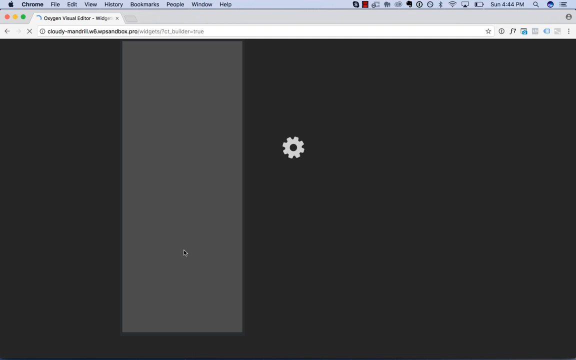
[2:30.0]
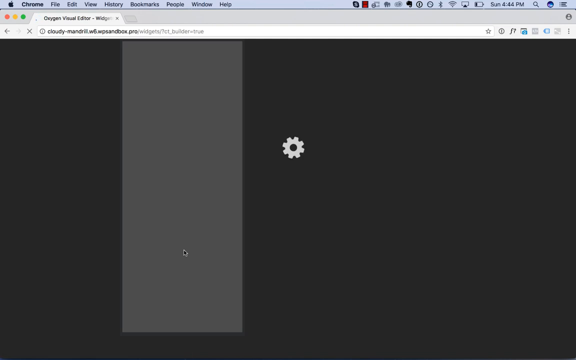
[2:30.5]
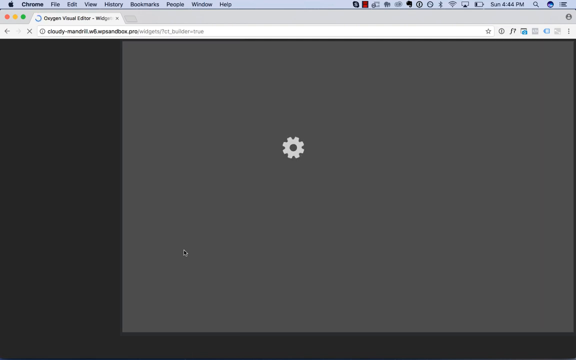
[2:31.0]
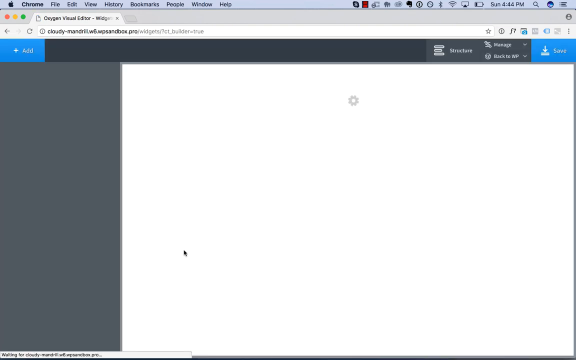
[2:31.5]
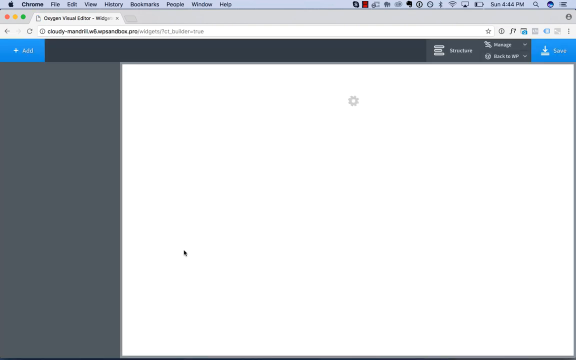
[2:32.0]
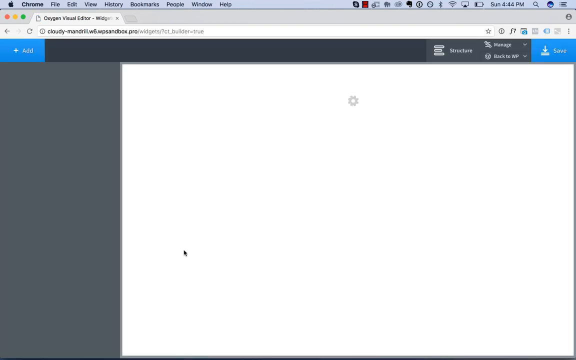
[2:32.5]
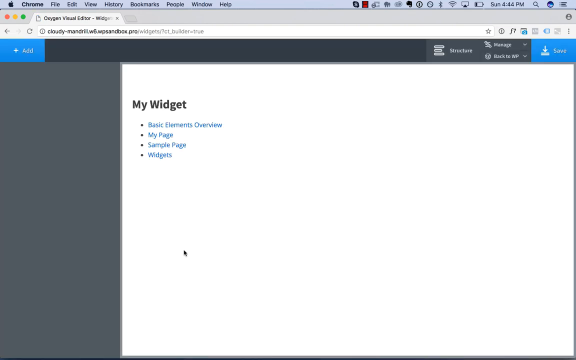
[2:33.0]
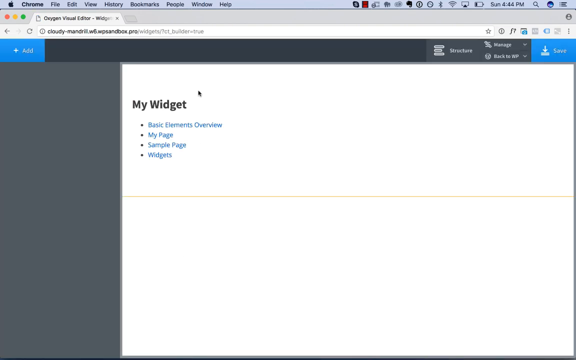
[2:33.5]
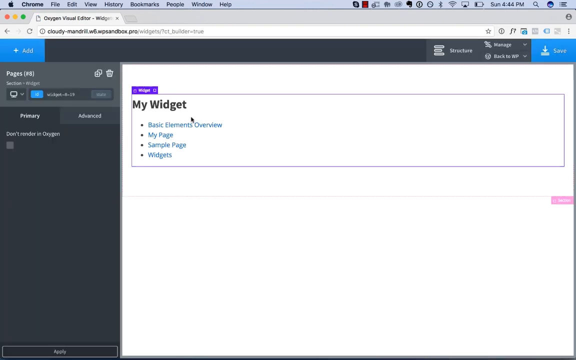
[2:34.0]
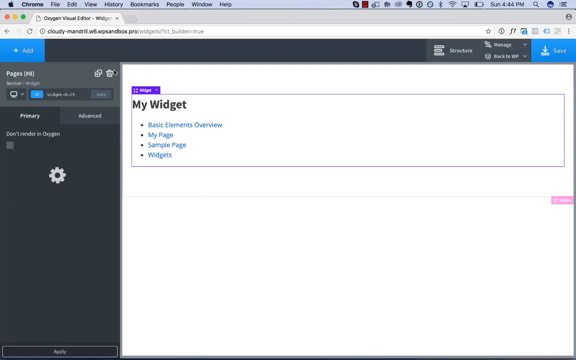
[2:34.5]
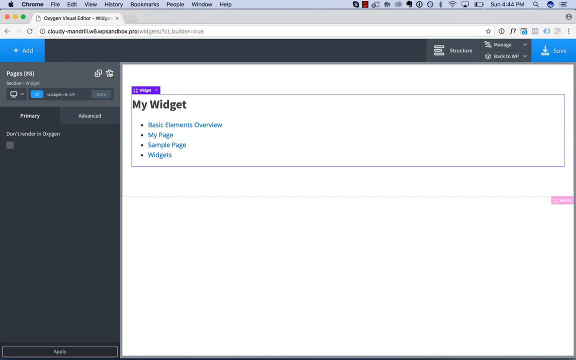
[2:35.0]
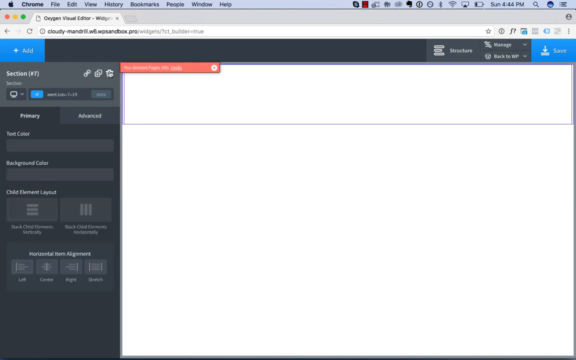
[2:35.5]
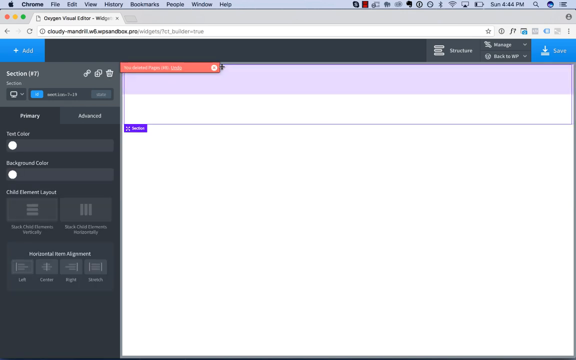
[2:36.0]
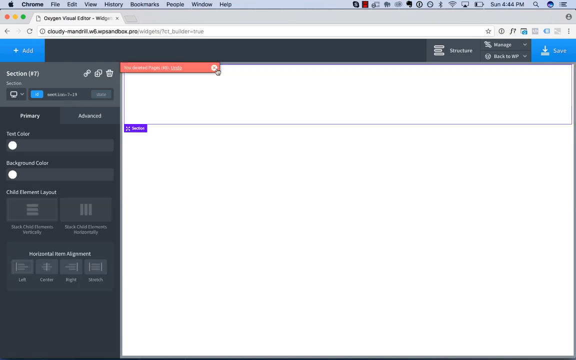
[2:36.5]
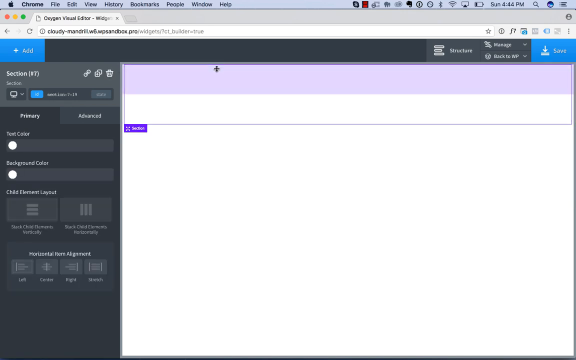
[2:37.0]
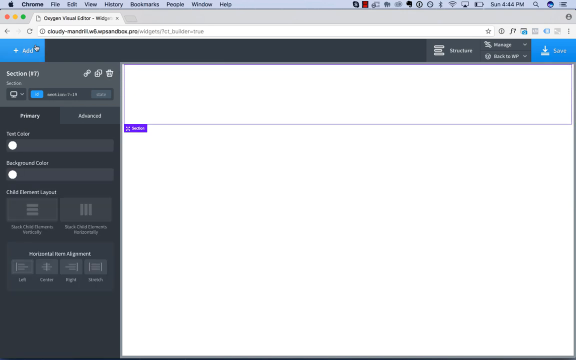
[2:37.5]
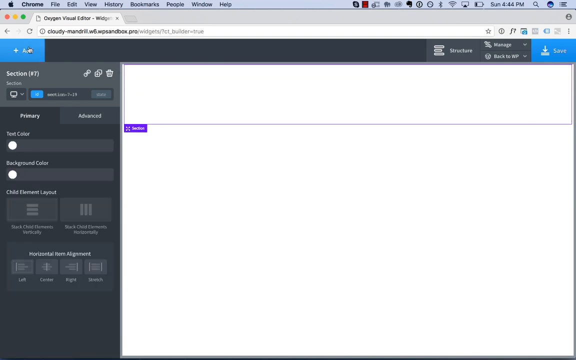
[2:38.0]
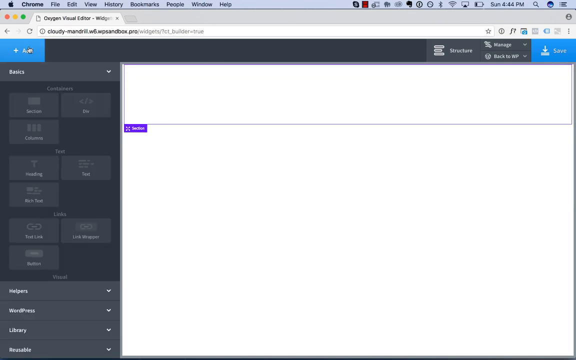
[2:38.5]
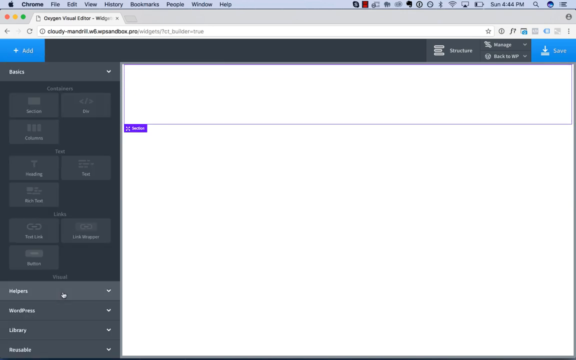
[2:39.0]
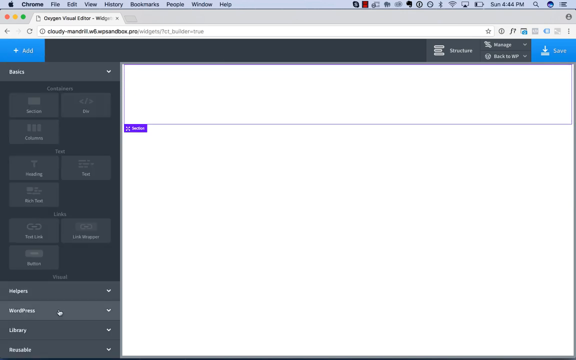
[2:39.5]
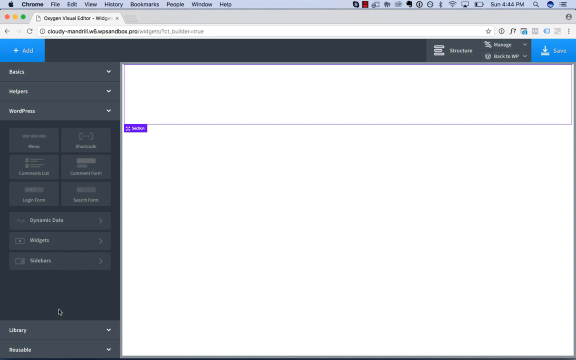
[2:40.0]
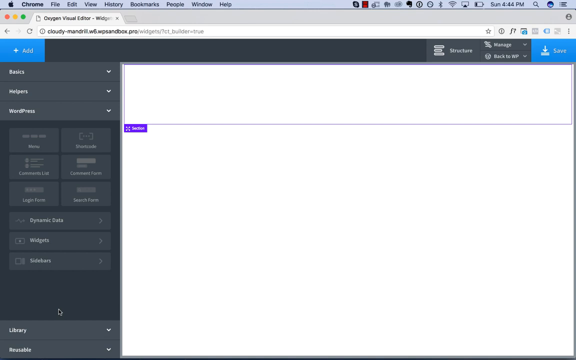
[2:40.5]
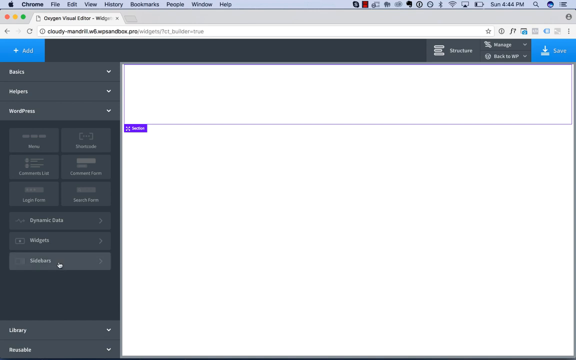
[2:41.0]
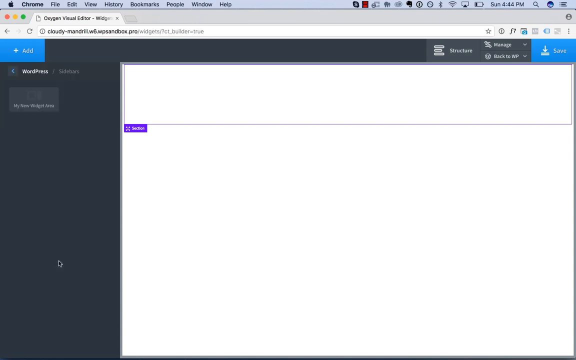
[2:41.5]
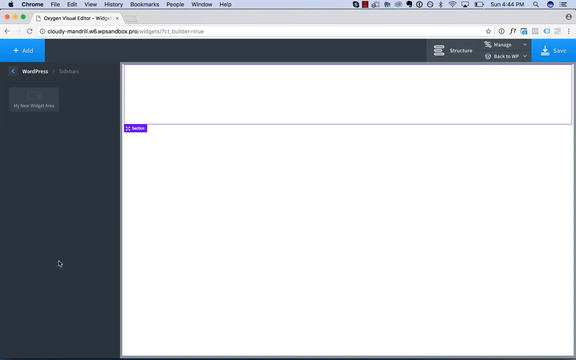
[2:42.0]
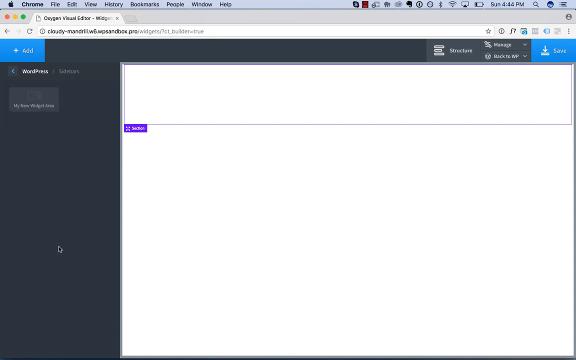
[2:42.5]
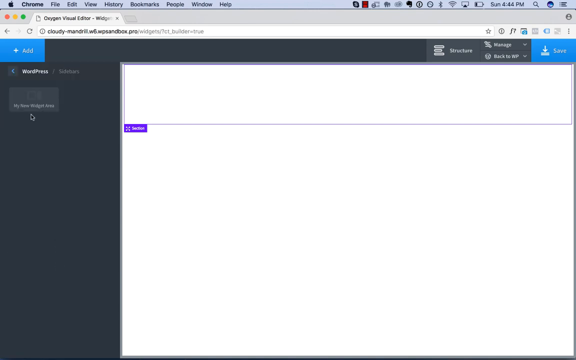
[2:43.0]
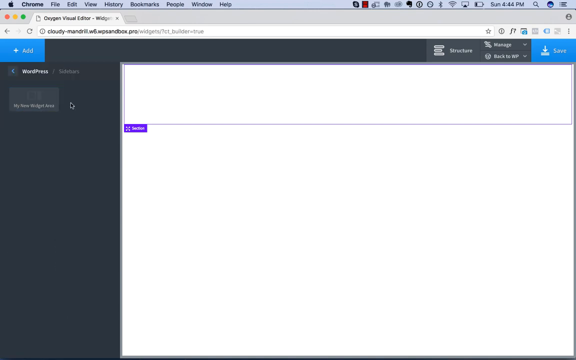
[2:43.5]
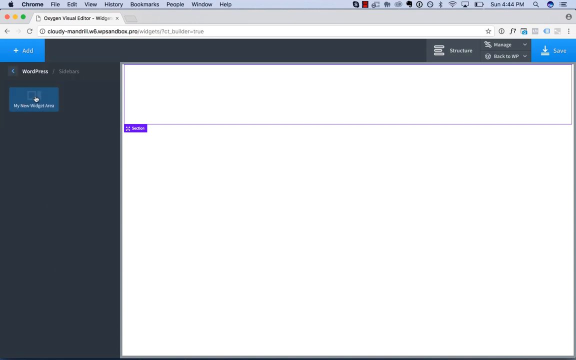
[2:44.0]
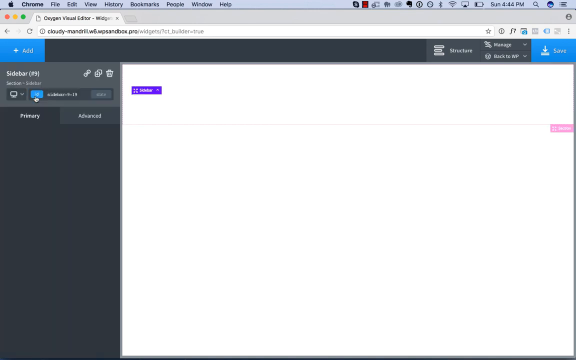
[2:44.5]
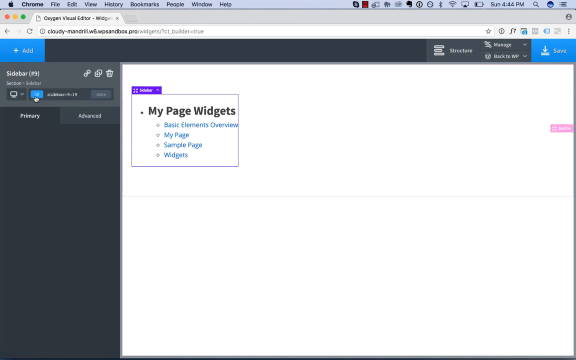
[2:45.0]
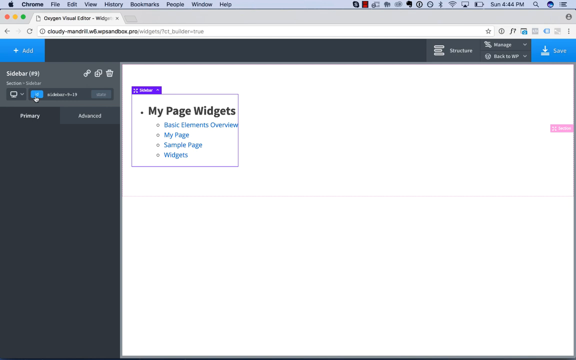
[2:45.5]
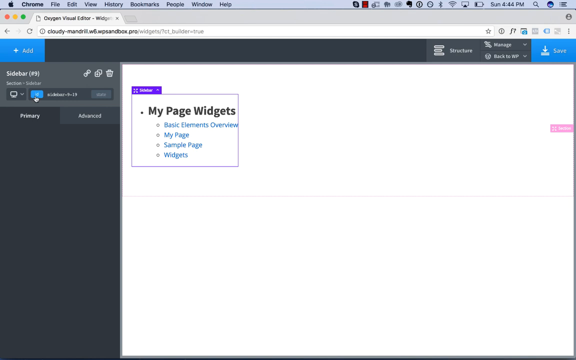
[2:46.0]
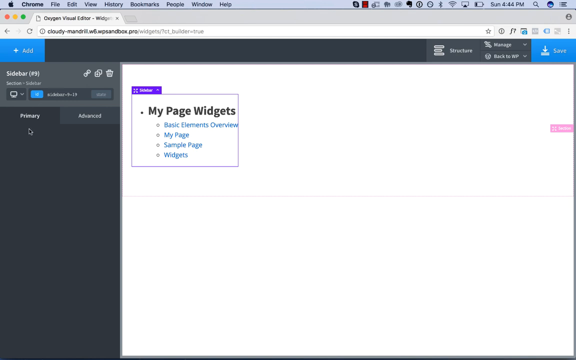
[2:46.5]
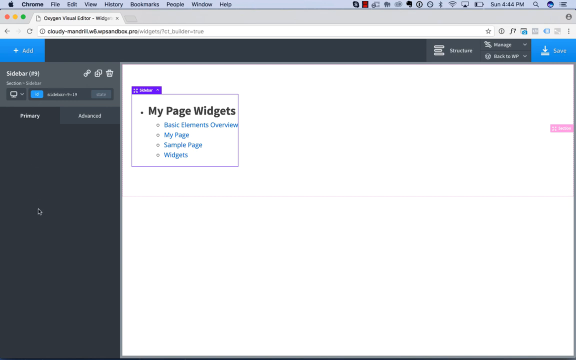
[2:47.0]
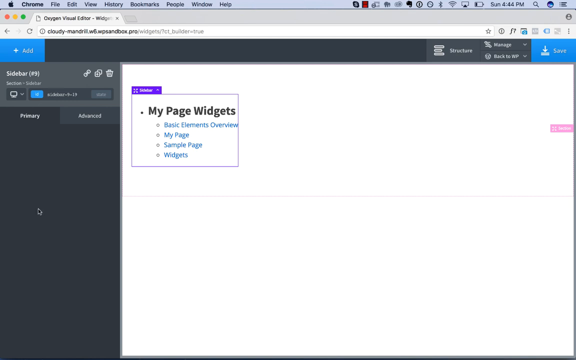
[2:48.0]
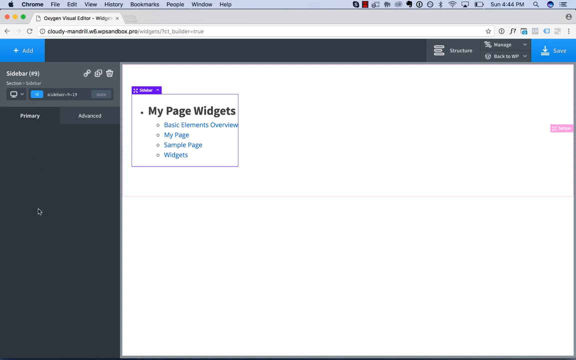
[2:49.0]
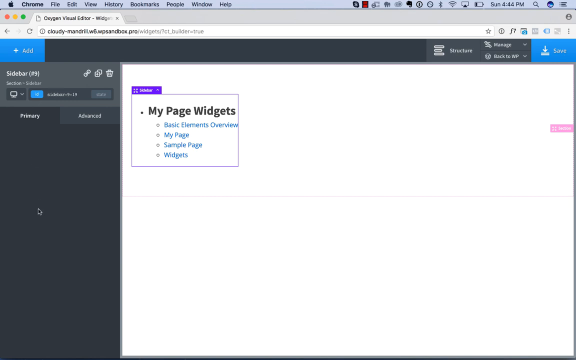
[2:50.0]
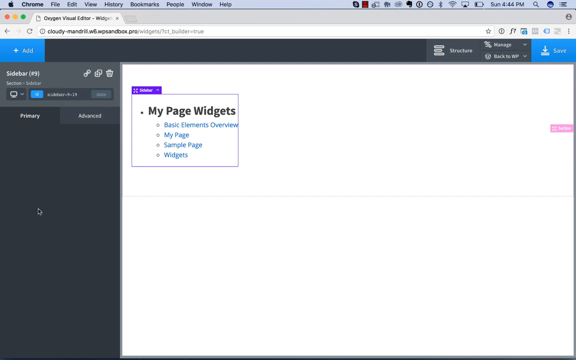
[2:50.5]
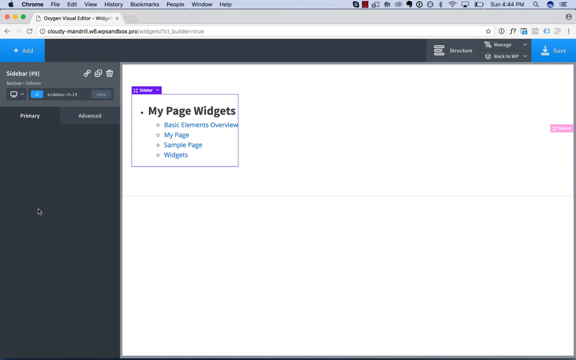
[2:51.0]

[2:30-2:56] A user's Mac desktop shows the Apple logo in the top left corner, with Chrome open to a tab for Oxygen Visual Editor, where they are adding widgets and pages to a WordPress site. The page is loading, with a gear spinning in the middle of the screen, before a blank white background appears and text pops up on it, reading "My Widget, Basic Elements, Overview, My Page, Sample Page, and Widgets" in the top left. There is a blue Add button at the top right and a blue Save button. The user clicks My Widget and starts deleting sections from it, then goes back to Add to add a sidebar, adding a new widget area from within Oxygen Visual Editor.